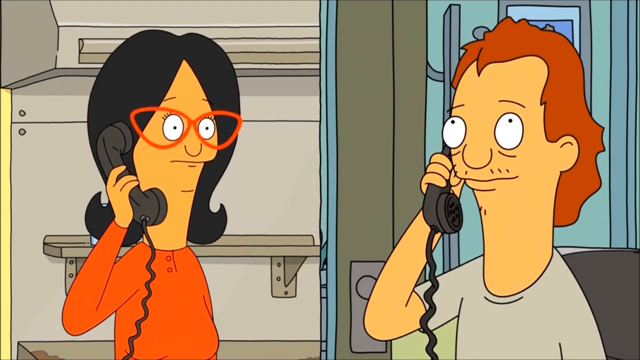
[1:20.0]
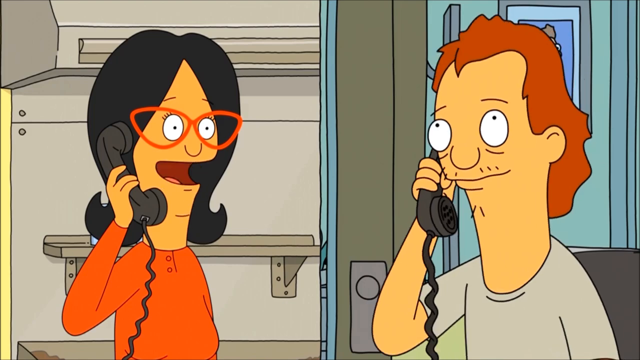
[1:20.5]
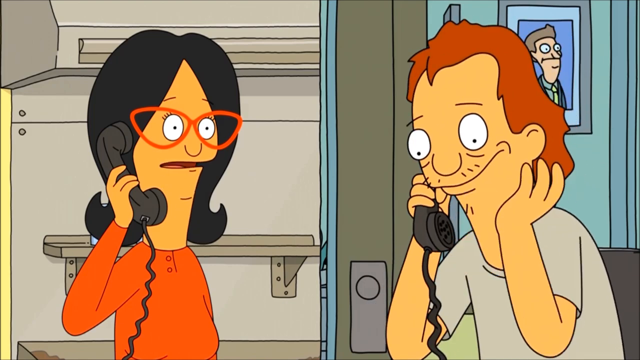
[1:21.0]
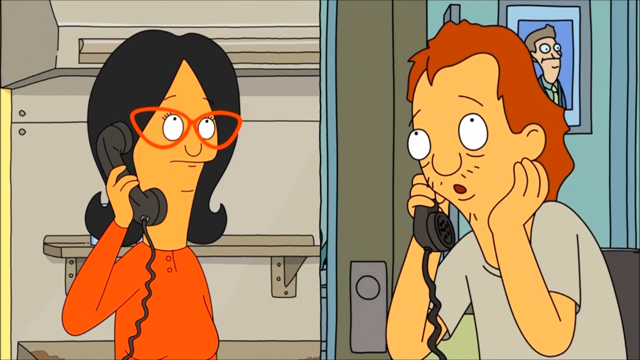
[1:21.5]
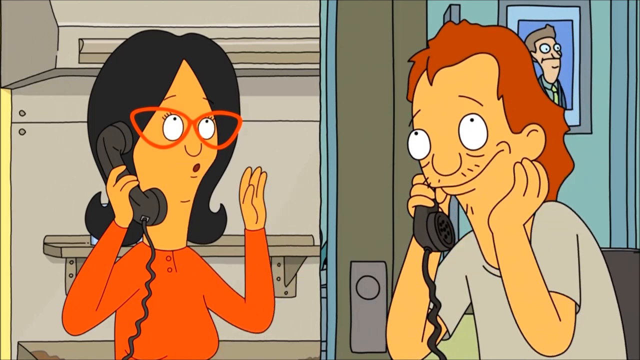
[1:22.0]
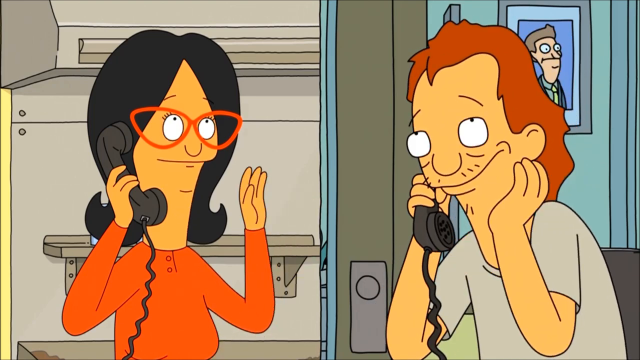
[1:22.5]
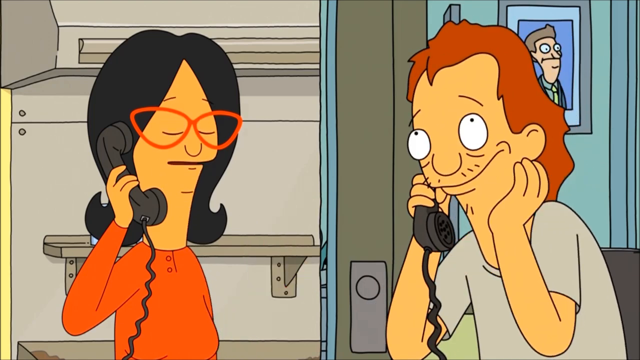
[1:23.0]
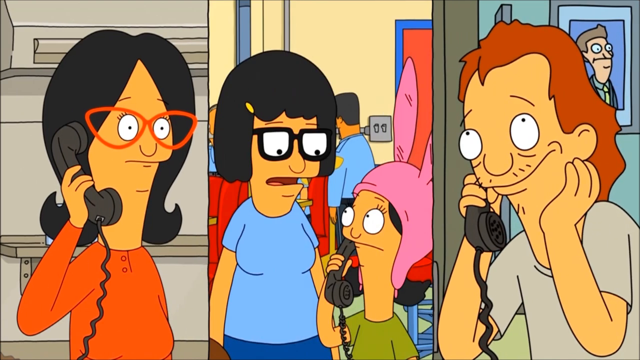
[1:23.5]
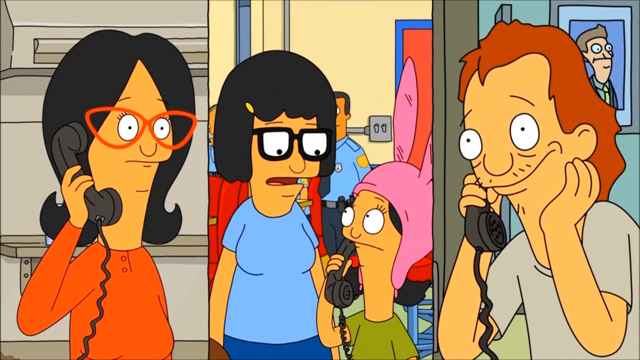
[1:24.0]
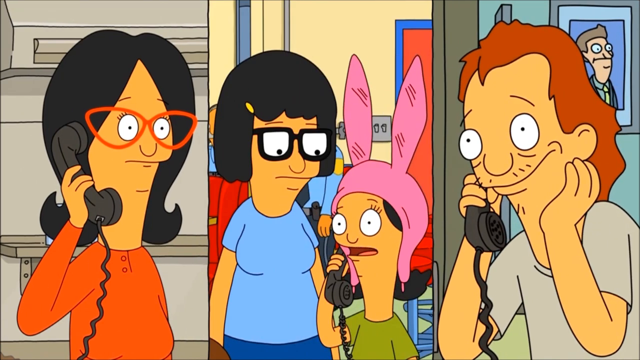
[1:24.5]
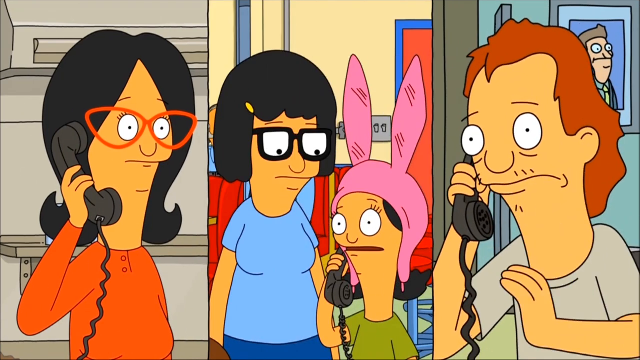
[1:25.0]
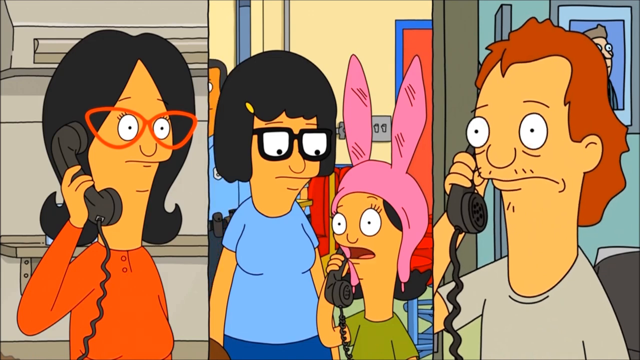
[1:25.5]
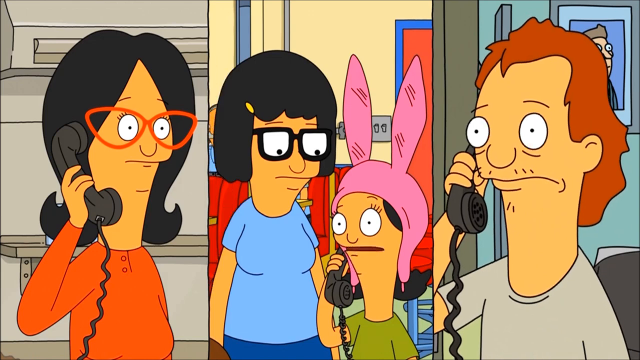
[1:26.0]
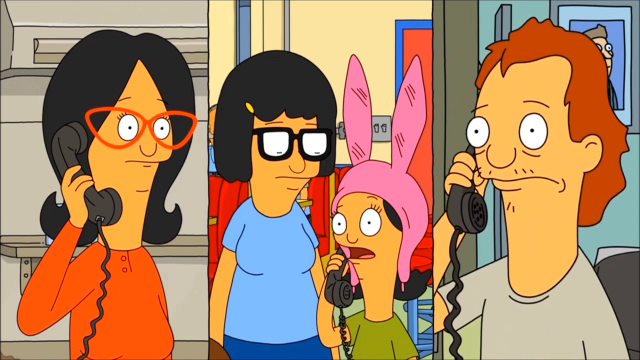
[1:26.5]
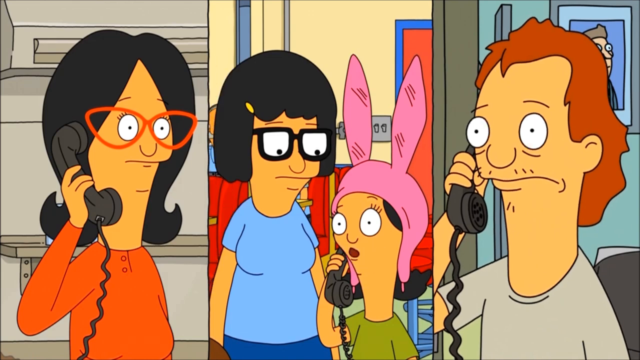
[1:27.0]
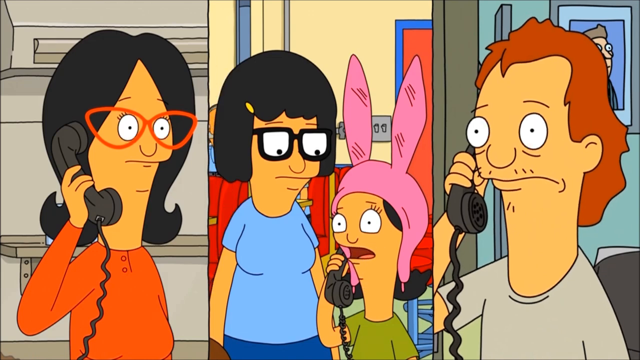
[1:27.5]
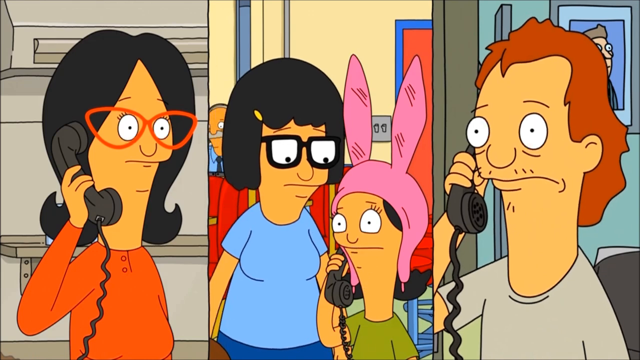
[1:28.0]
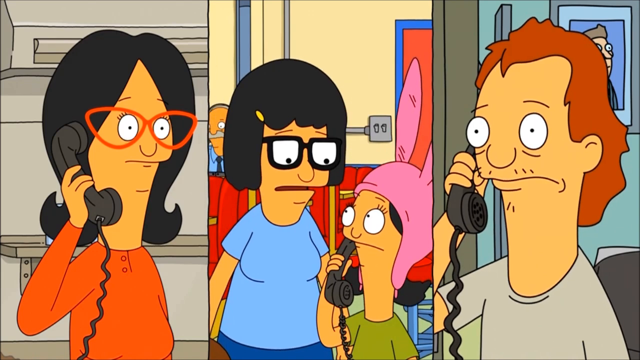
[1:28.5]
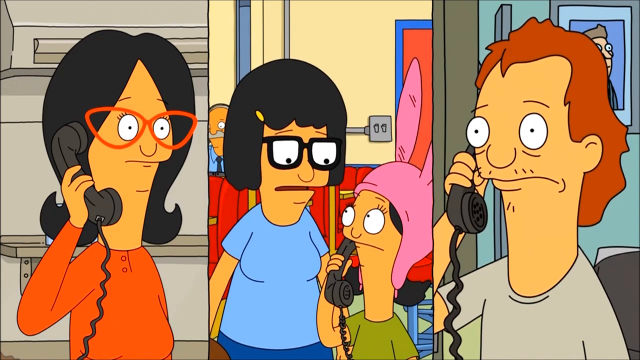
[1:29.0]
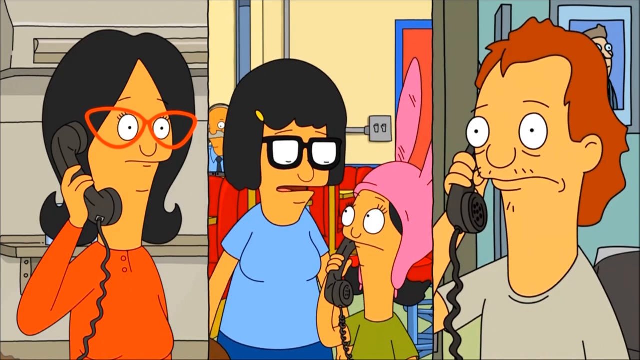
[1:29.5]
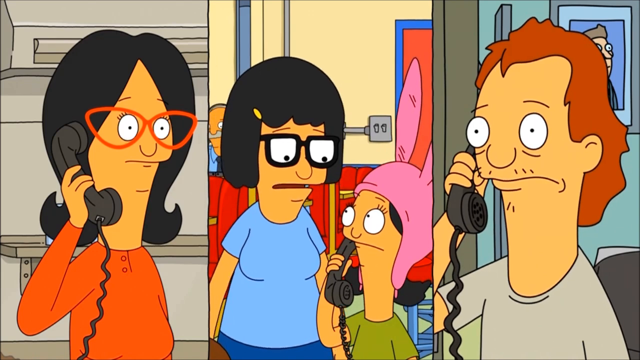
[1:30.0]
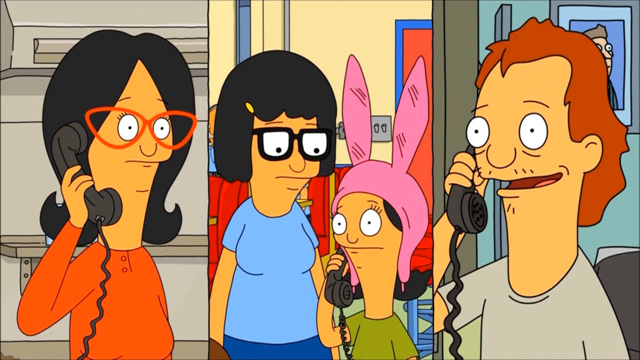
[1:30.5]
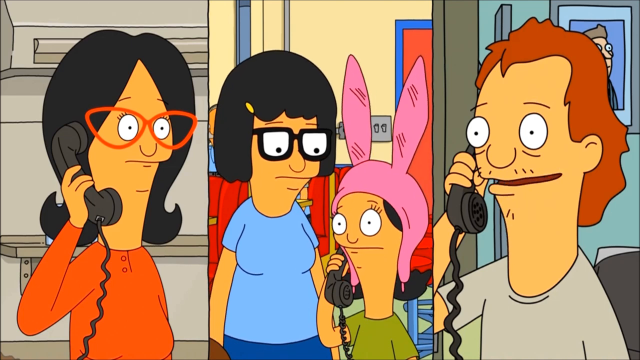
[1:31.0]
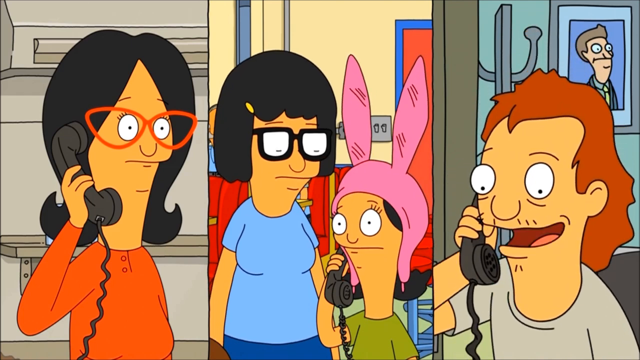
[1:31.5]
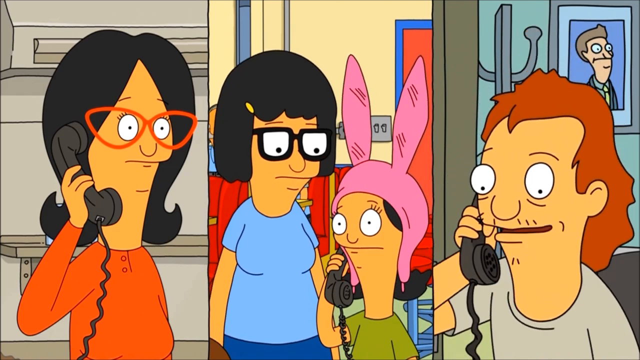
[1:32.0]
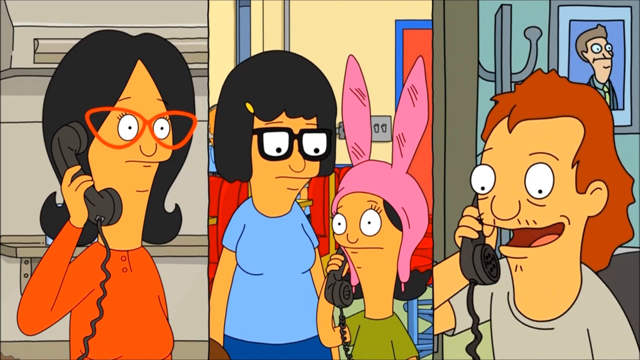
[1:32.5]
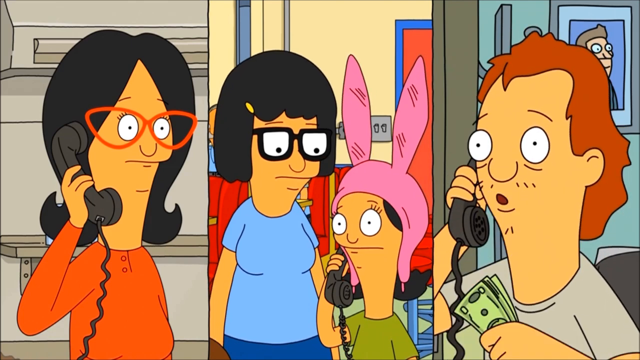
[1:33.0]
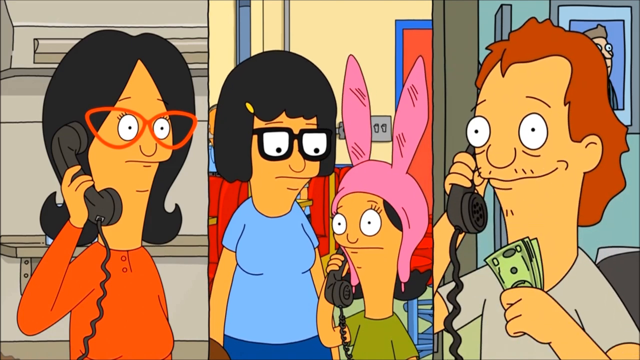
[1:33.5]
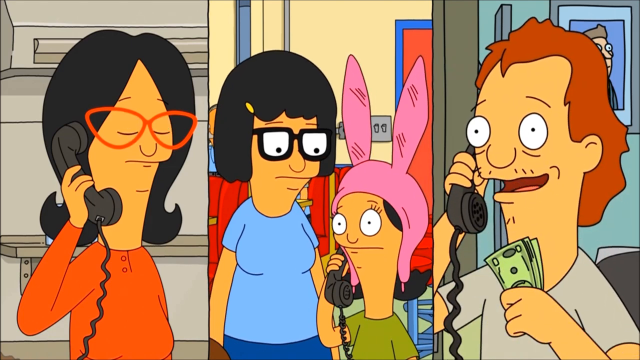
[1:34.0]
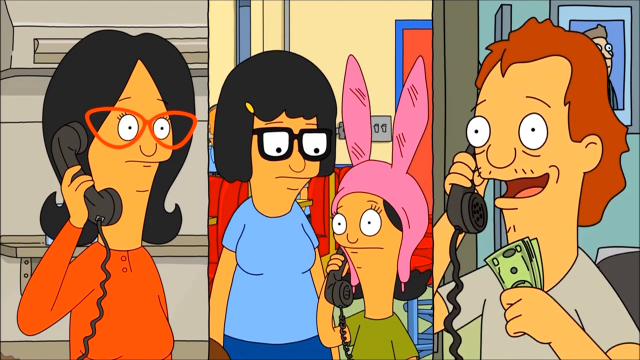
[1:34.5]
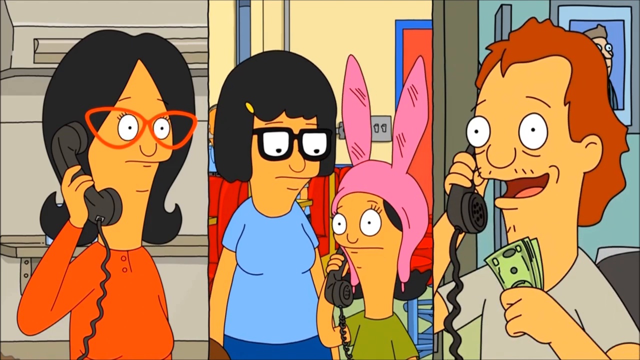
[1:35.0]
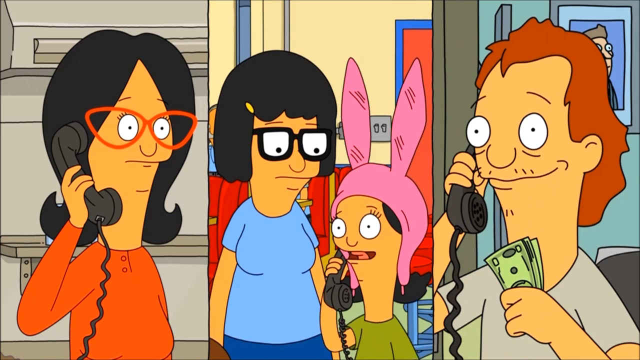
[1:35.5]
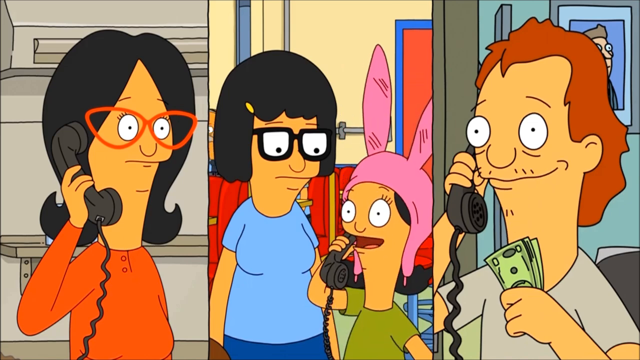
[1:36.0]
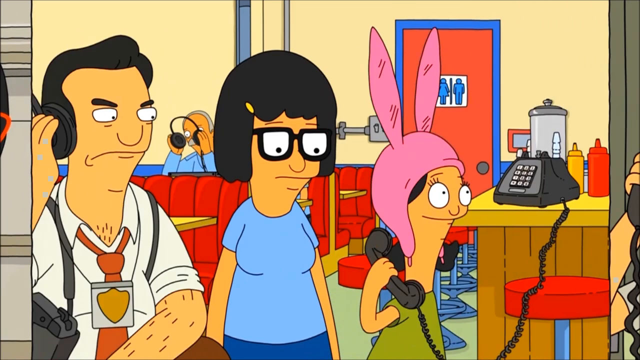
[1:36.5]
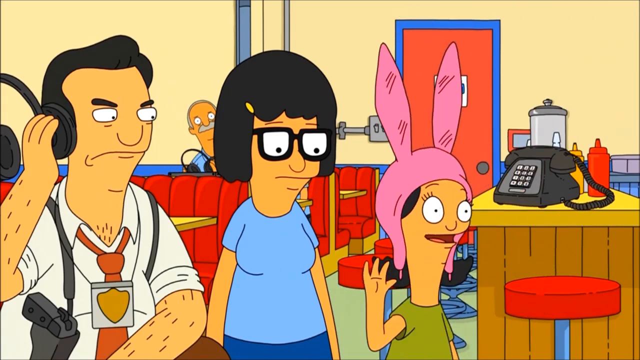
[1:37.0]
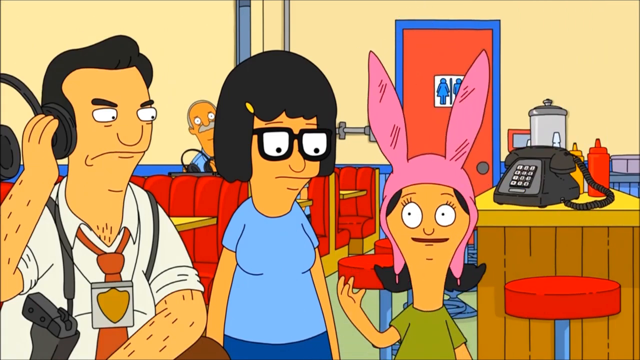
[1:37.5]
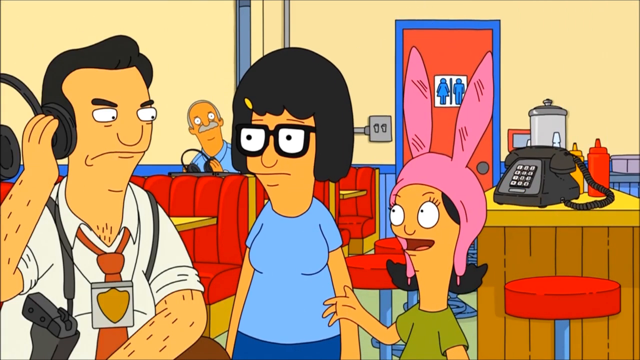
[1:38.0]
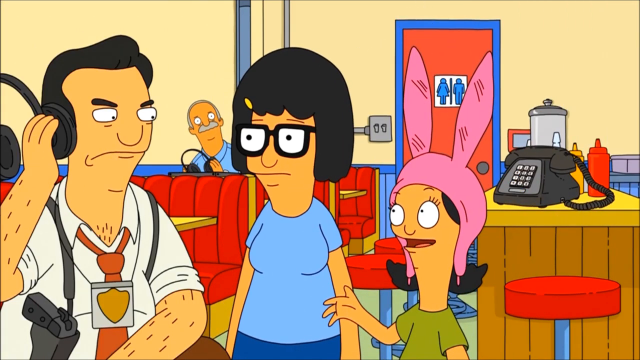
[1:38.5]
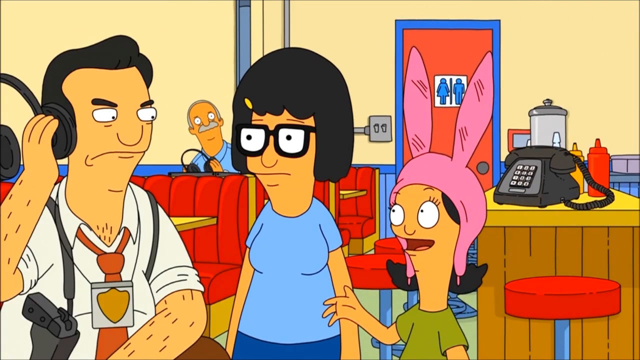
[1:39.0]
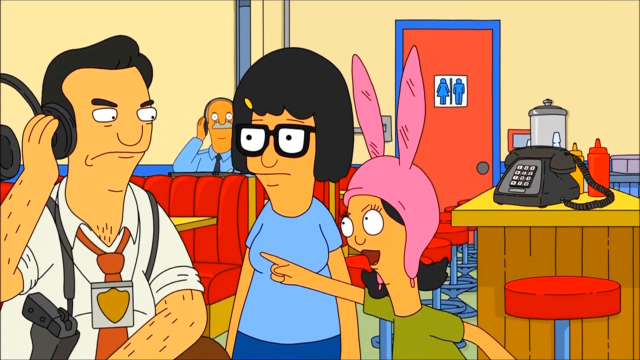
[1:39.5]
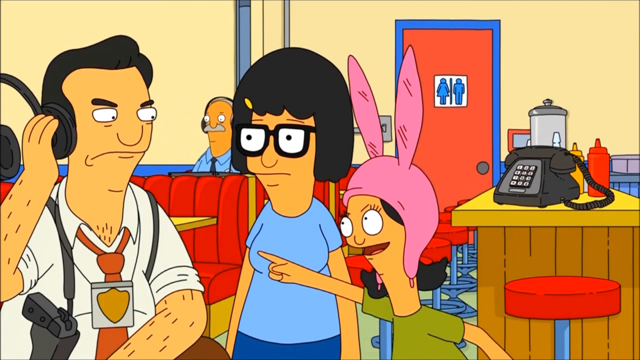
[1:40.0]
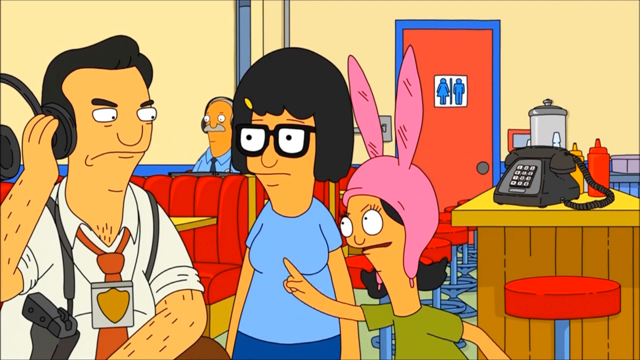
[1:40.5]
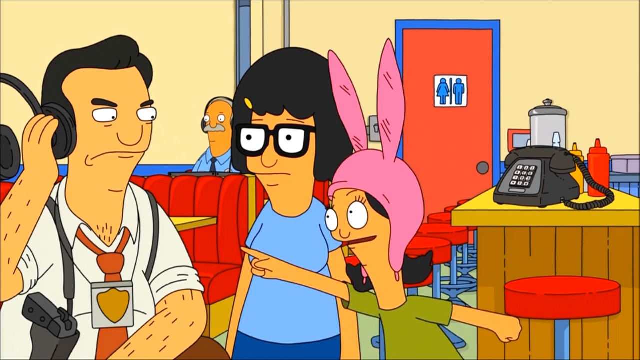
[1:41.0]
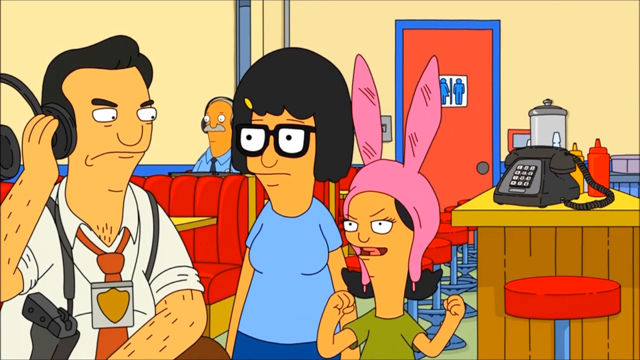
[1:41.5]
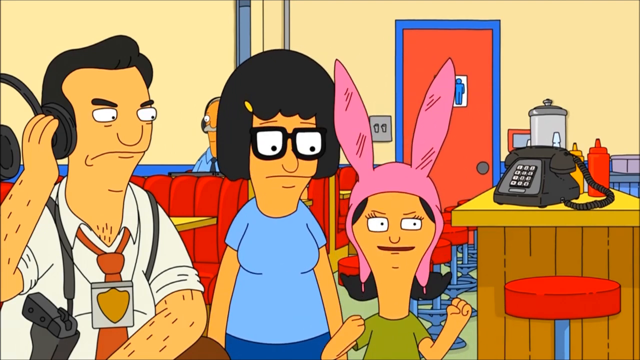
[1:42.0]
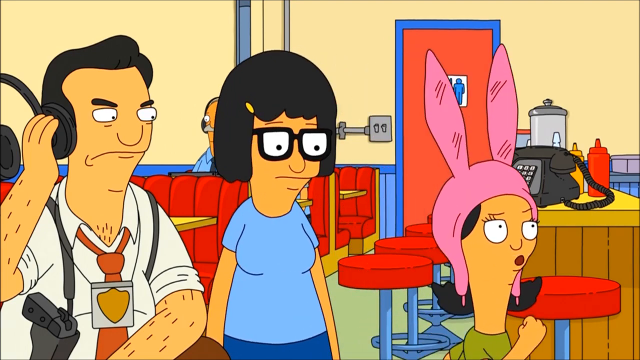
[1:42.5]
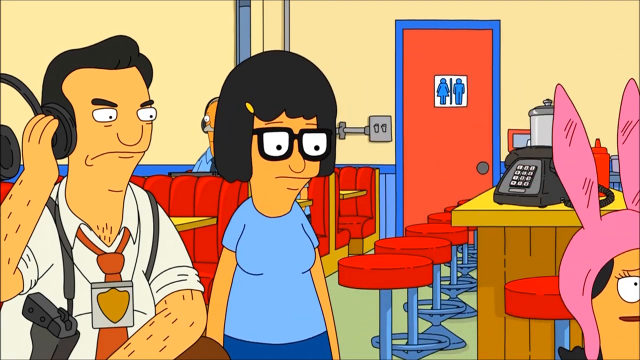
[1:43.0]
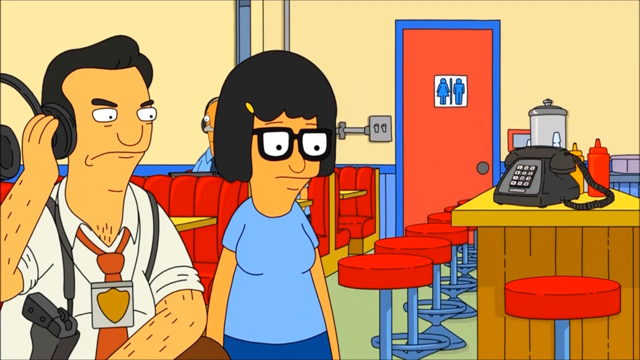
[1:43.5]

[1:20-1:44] The woman is still talking to the robber, who looks very happy. In the middle section of the screen, the girl talks to another person next to her while on the phone. It appears that something has been agreed upon over the phone. The woman in the orange shirt on the left and the robber on the right both look very confused and maybe a little worried as the girl talks to the person on her right, a woman wearing a blue shirt. The robber holds up a couple of dollar bills in his hand, as if perhaps he had a successful heist. The girl talks to the detective as he listens in. She finally hangs up and points at the detective in a way that is almost like she is accusing him of something. The scene ends with the detective looking very flustered.